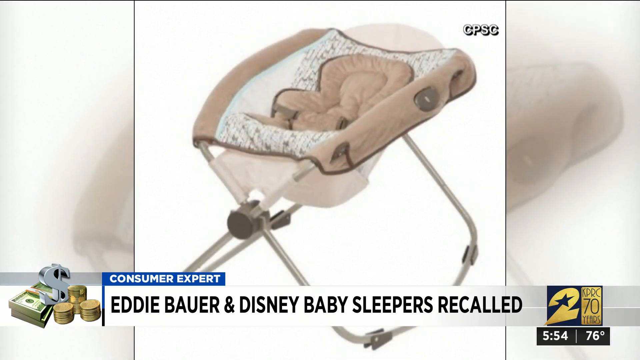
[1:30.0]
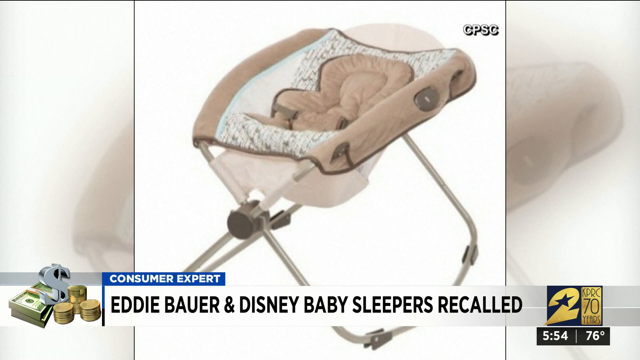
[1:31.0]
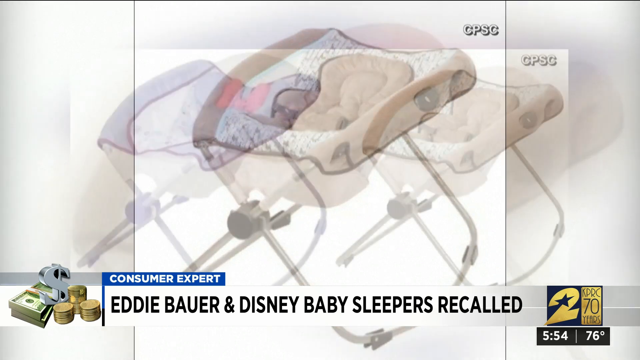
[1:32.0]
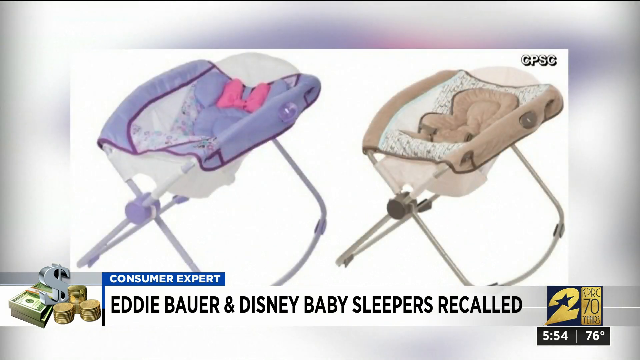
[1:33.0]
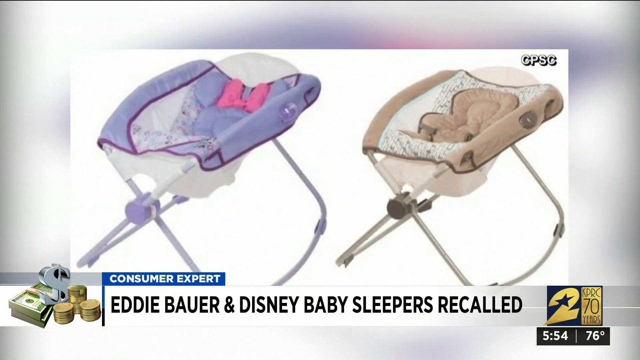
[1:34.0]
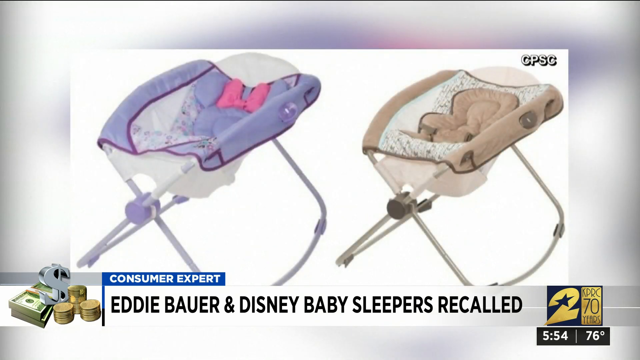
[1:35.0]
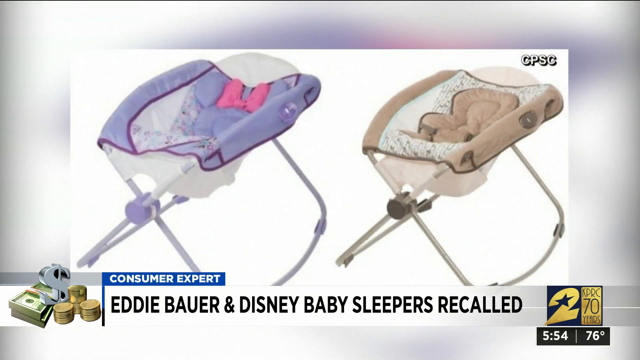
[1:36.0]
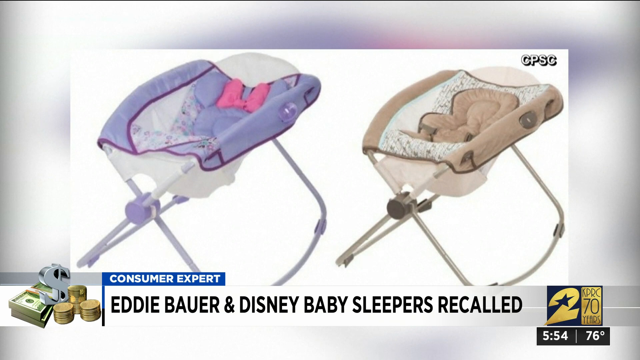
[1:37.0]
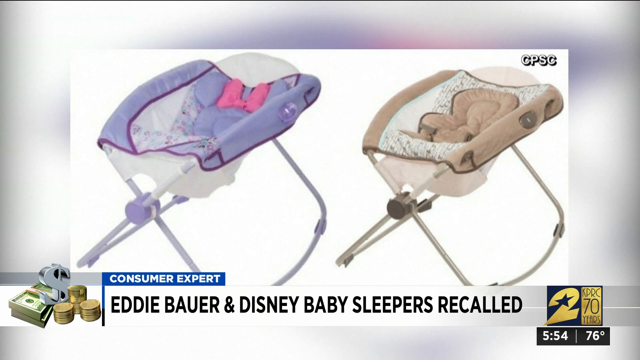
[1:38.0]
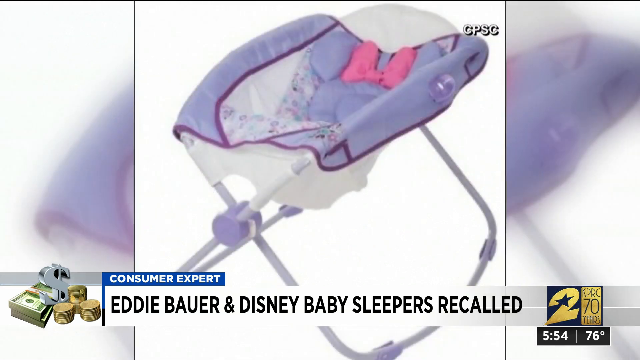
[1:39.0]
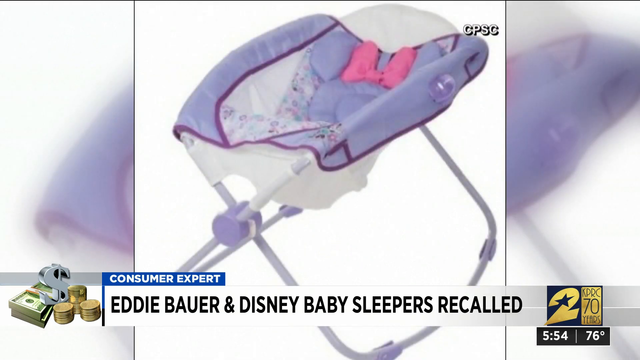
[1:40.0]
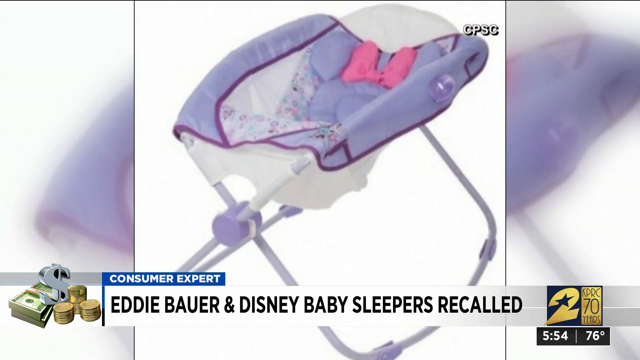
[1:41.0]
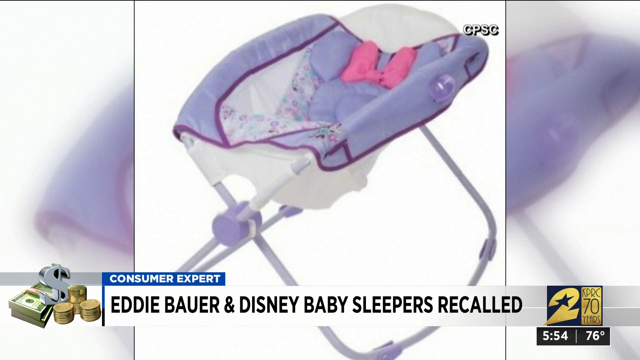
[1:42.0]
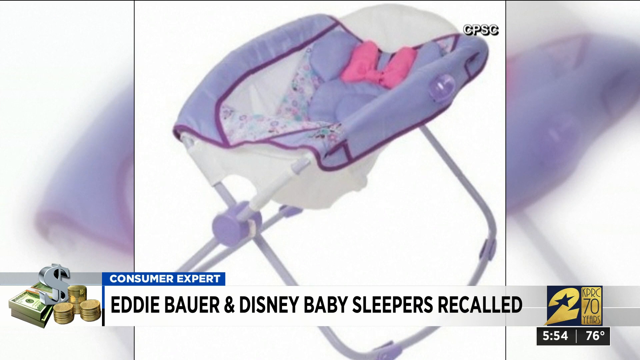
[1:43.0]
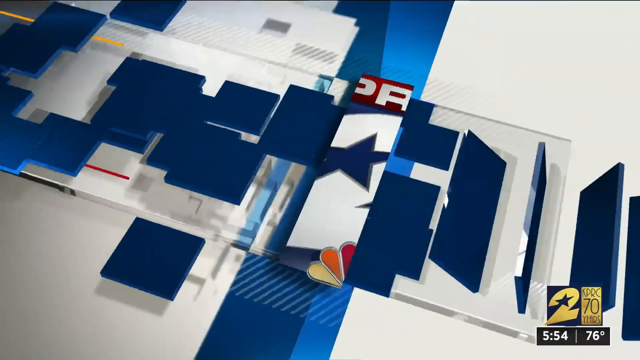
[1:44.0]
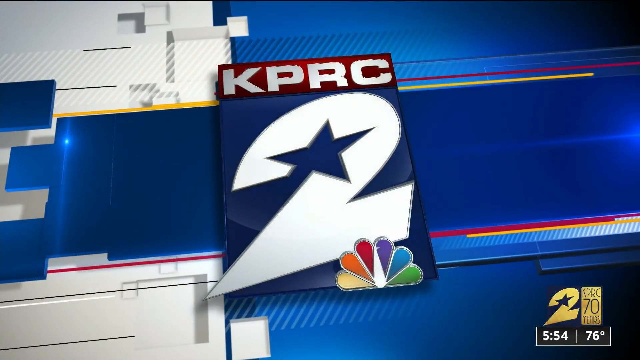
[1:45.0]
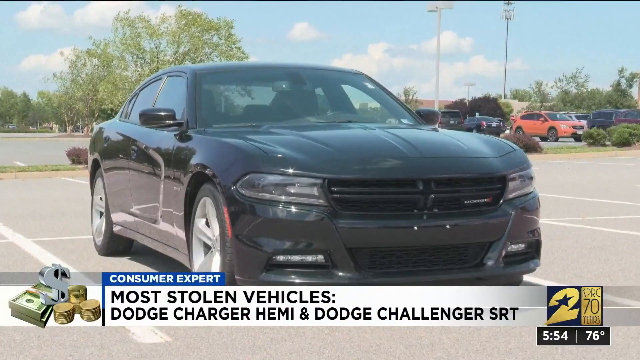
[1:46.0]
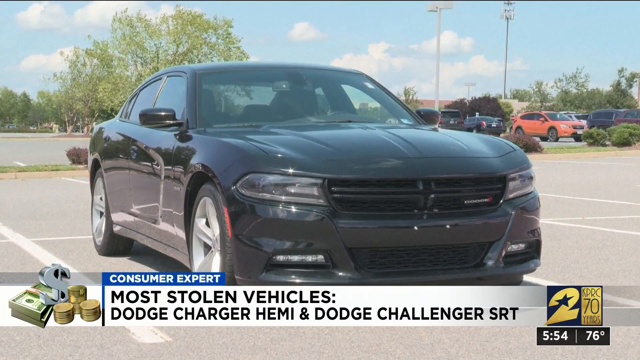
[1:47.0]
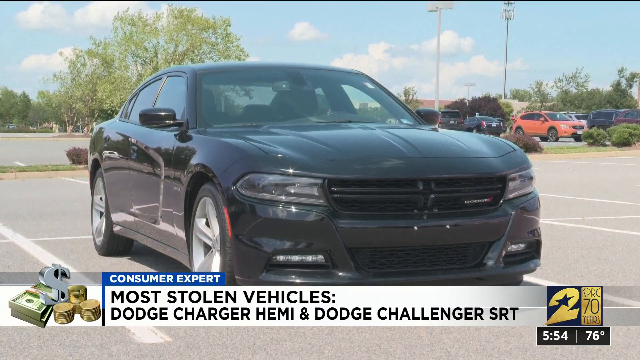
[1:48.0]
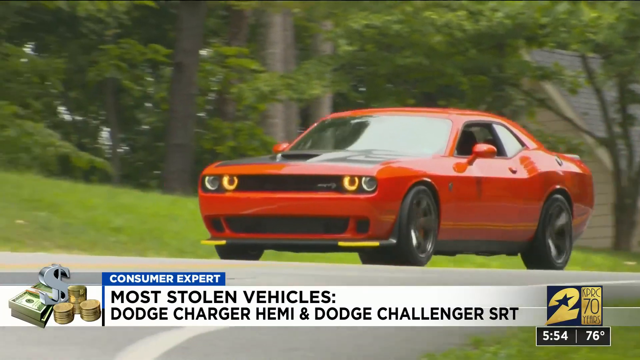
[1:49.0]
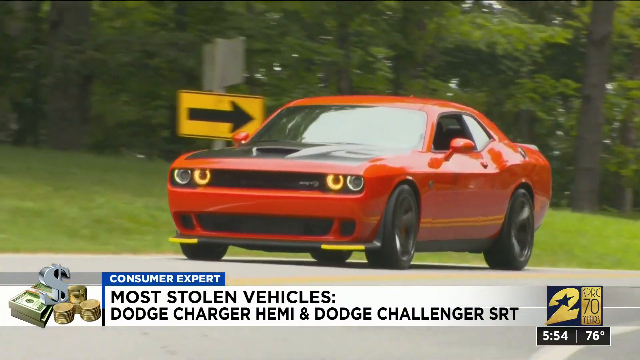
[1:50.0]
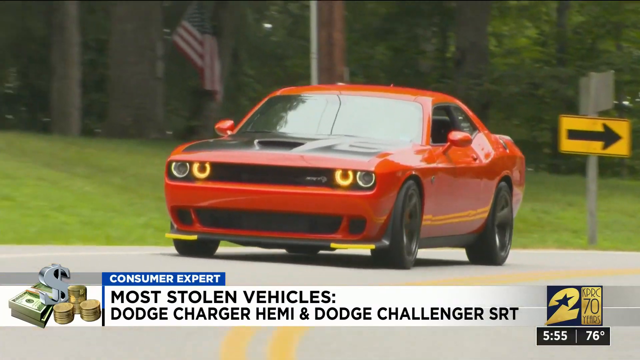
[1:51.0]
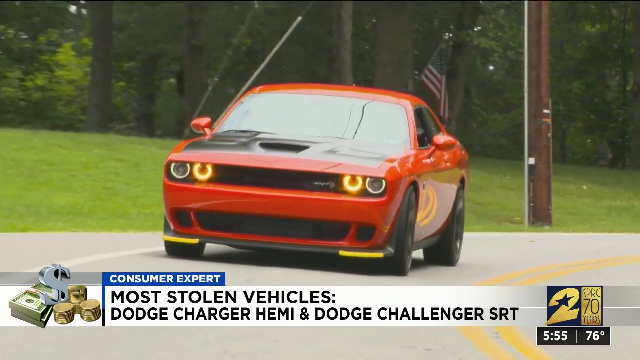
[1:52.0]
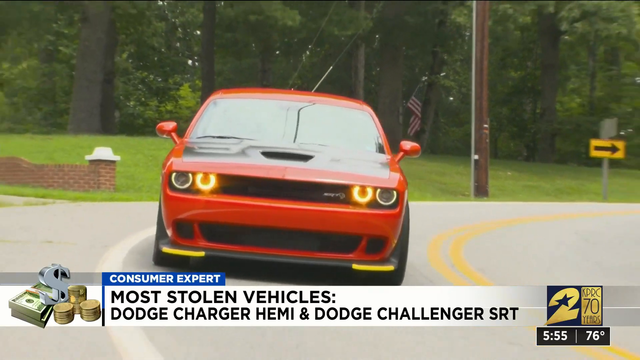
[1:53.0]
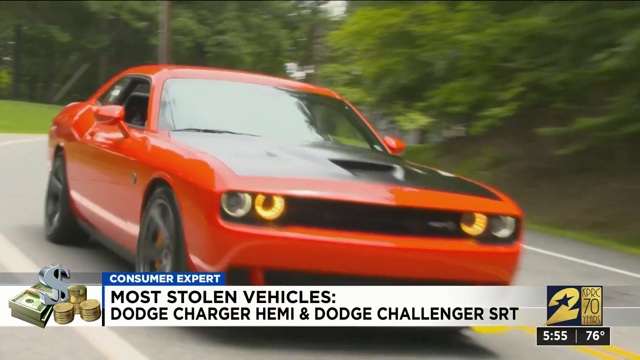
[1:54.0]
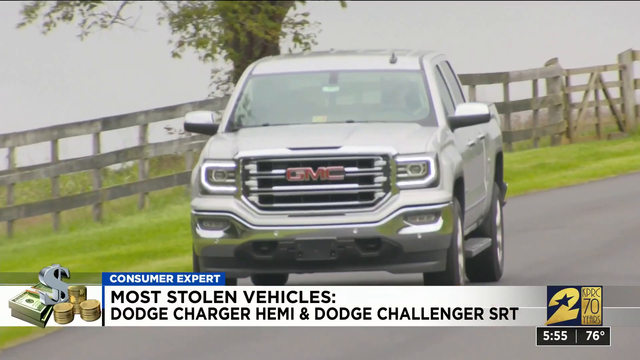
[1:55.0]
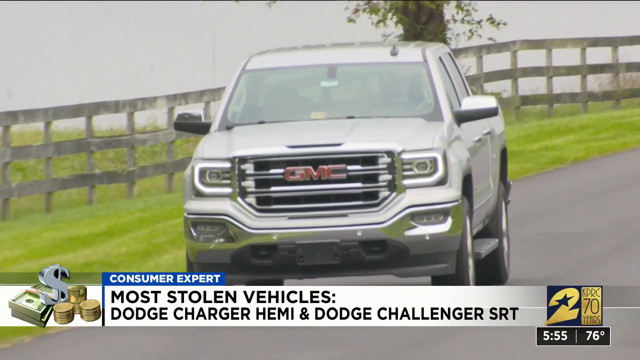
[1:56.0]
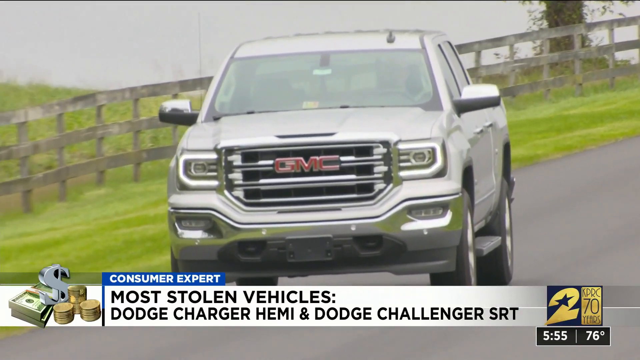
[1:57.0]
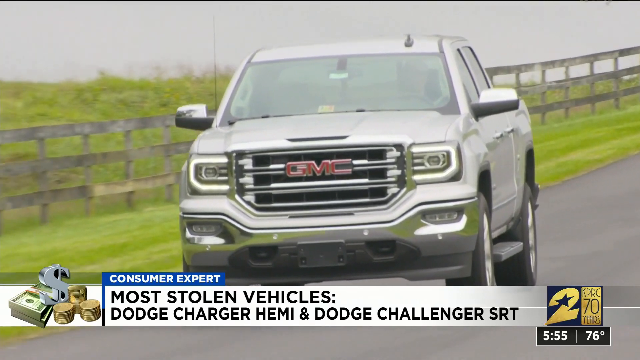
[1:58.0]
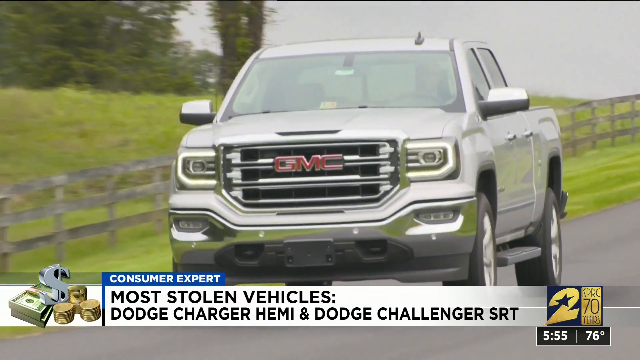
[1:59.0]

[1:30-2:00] A close-up image shows a brown and white baby sleeper. At the bottom of the screen is a blue label reading "Consumer Report" and, underneath, a white rectangular box with black font reading "Eddie Bauer and Disney baby sleepers recalled". Another image shows the brown baby sleeper next to a purple baby sleeper with a light purple Minnie Mouse pillow that has a pink bow, both on a white background. Then a close-up shows the white and purple baby sleeper with the Minnie Mouse pillow and pink bow. The screen changes to a kind of white and blue split background with the KPRC 2 news logo in the middle: a large white number two with a star cut out in the middle and the NBC peacock logo at the bottom. Next is a video of a black four-door car parked in a parking lot, with a white rectangular box at the bottom of the screen reading "most stolen vehicles: Dodge Charger Hemi and Dodge Challenger SRT". Then what looks like a red car drives down the road, seen kind of from the side and then from in front of the car as it drives past. A large silver GMC truck drives down the road, viewed kind of from in front of it. Finally there is a close-up of what looks like a Cadillac logo on a car grille.